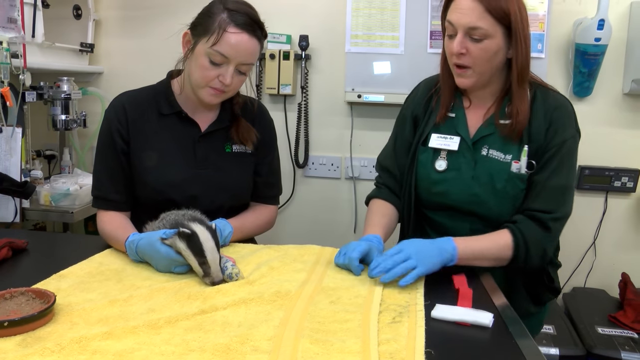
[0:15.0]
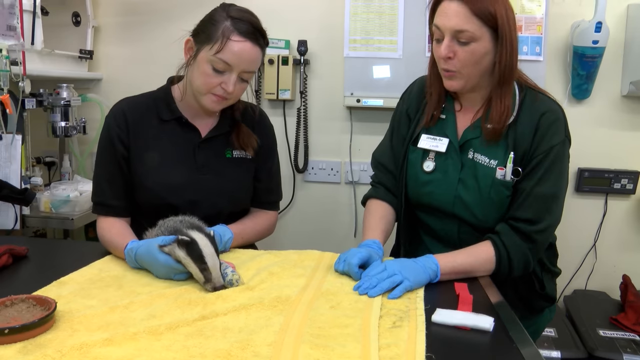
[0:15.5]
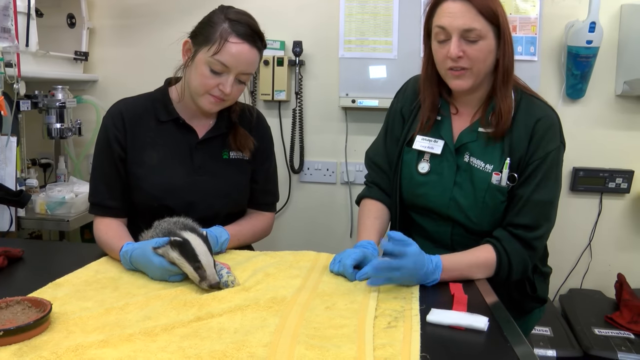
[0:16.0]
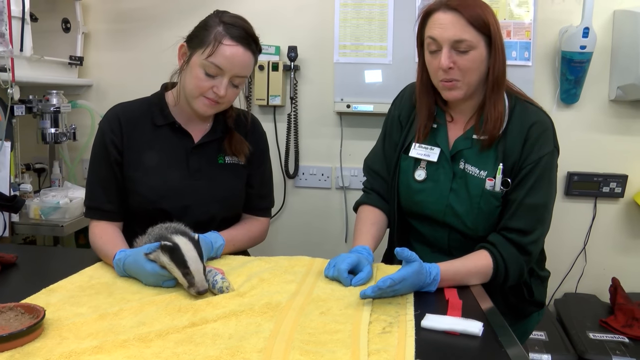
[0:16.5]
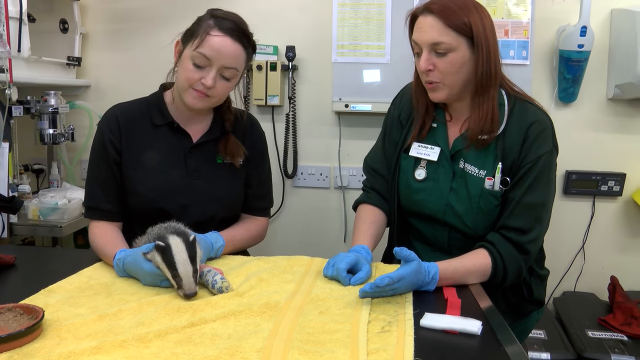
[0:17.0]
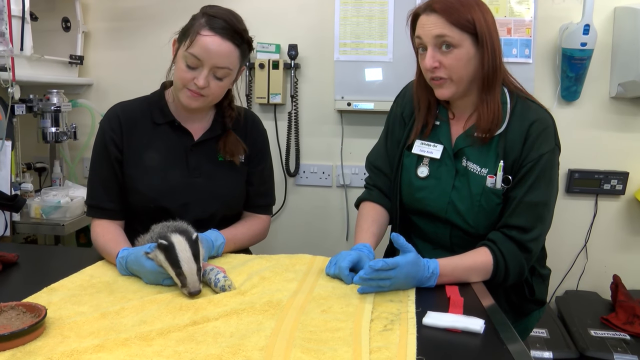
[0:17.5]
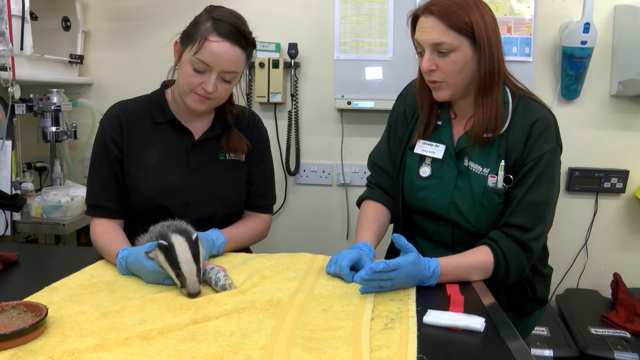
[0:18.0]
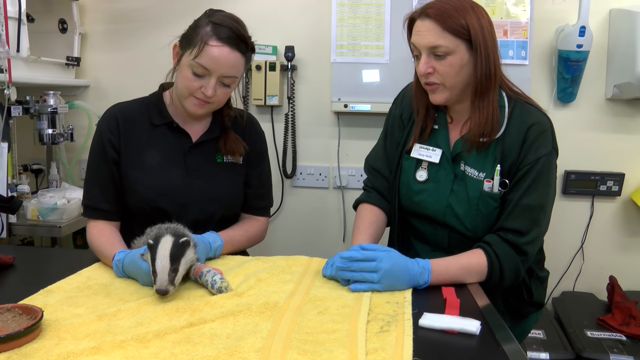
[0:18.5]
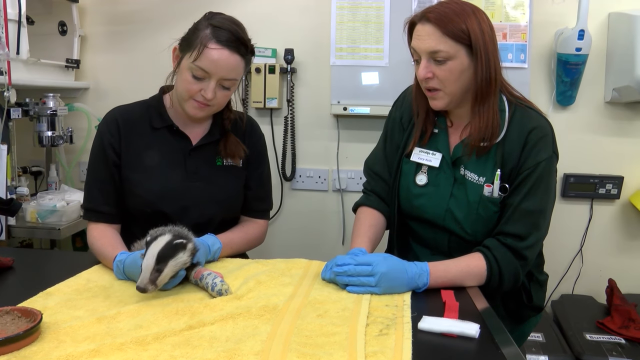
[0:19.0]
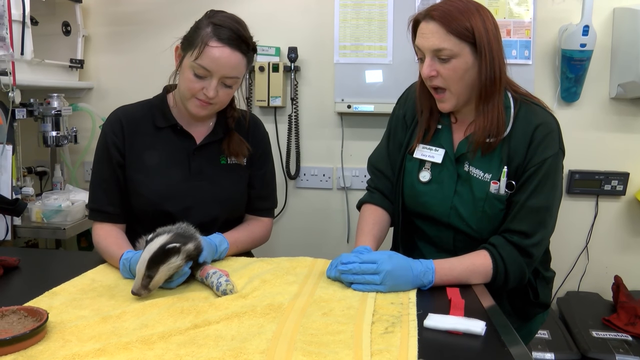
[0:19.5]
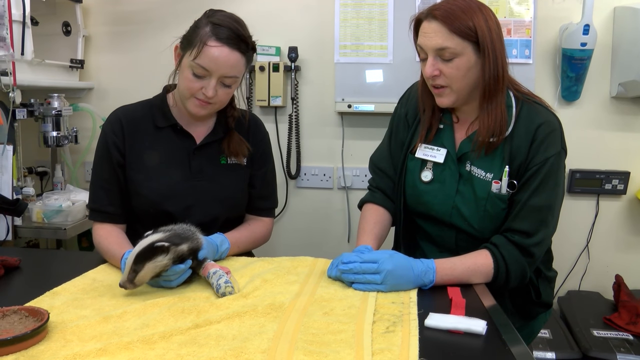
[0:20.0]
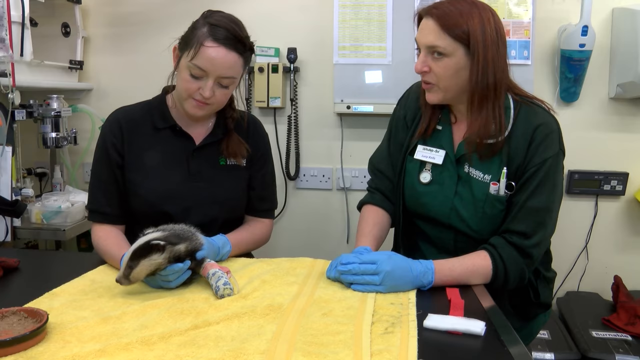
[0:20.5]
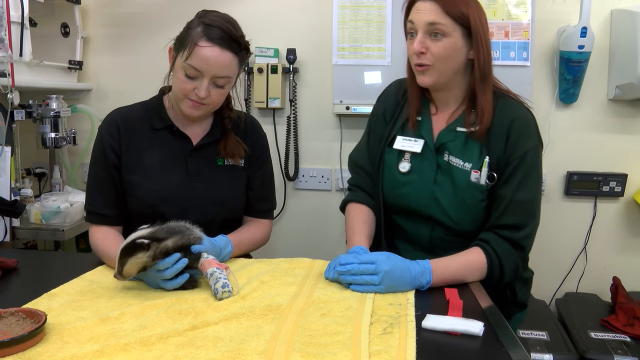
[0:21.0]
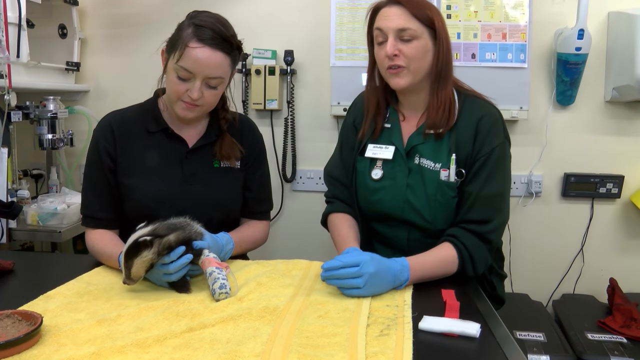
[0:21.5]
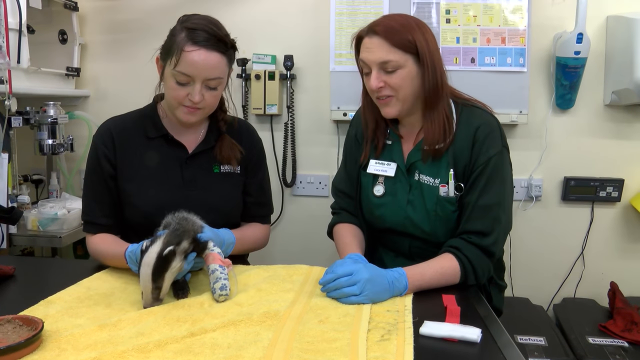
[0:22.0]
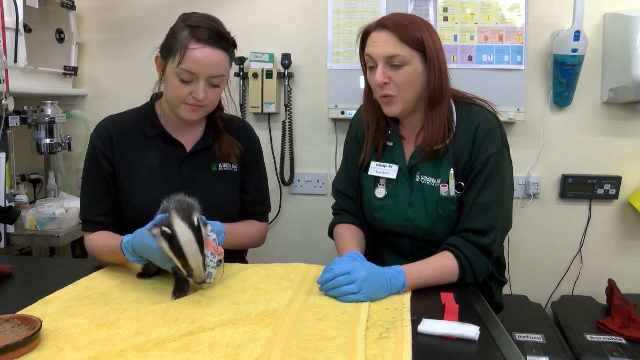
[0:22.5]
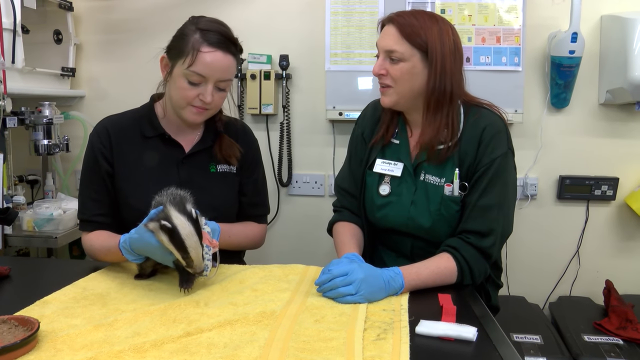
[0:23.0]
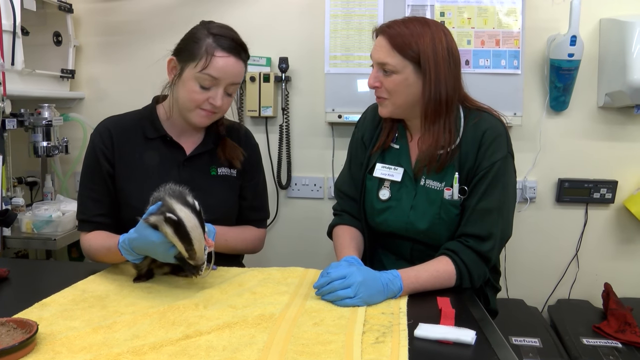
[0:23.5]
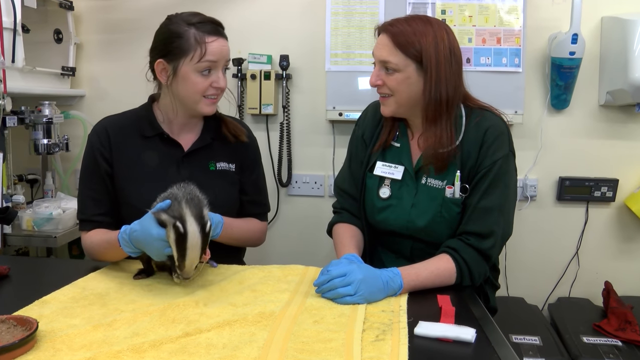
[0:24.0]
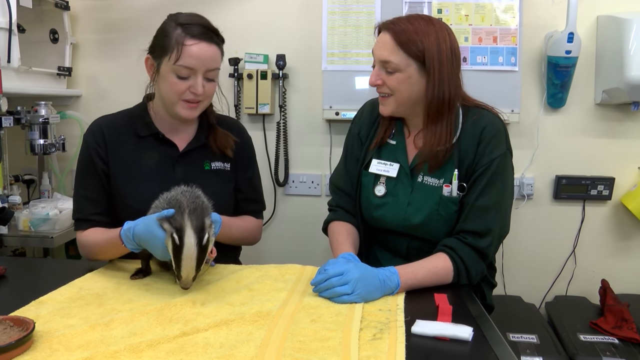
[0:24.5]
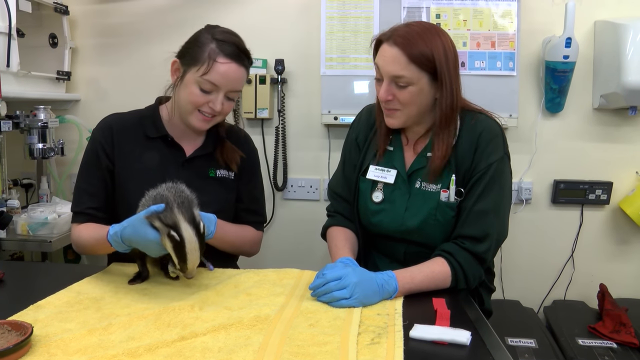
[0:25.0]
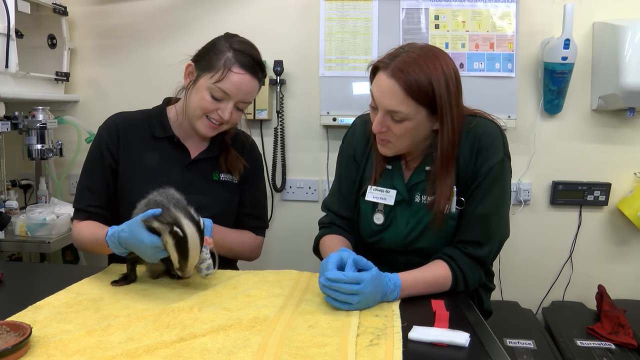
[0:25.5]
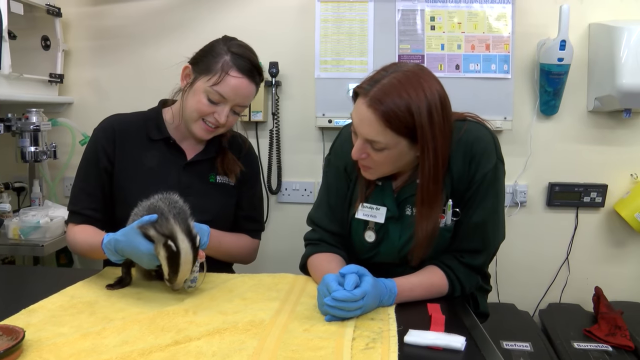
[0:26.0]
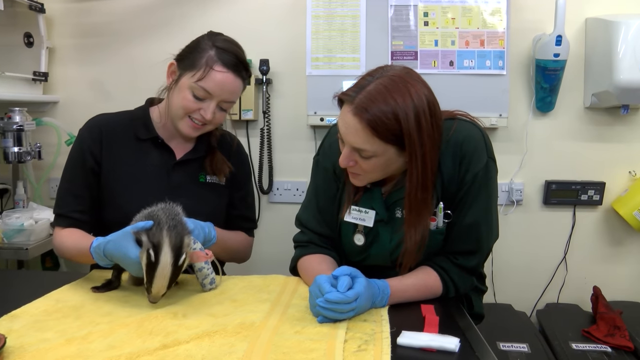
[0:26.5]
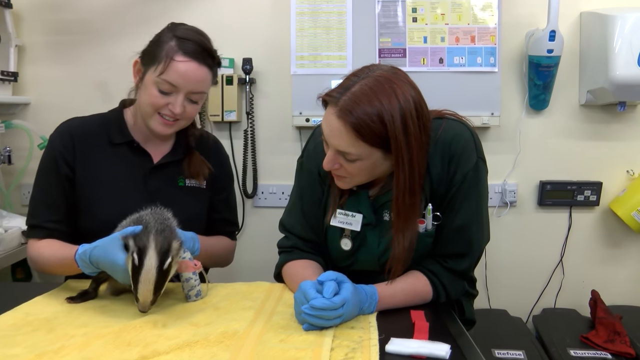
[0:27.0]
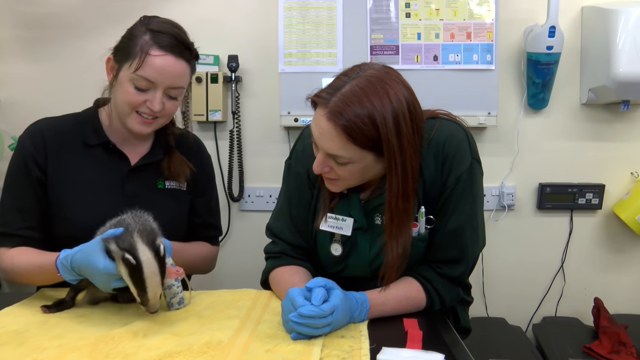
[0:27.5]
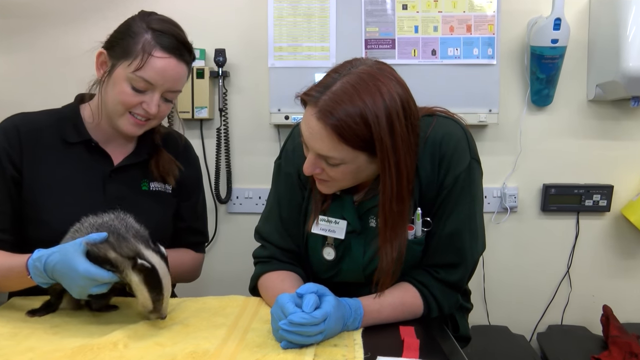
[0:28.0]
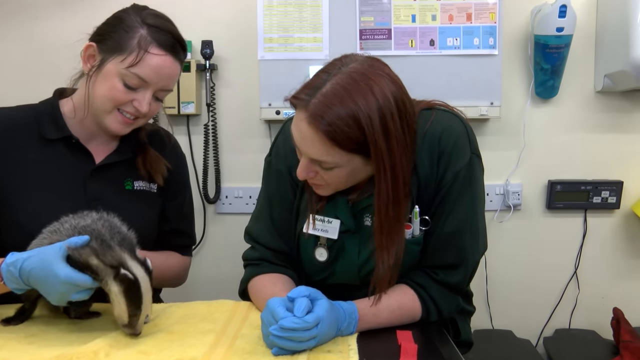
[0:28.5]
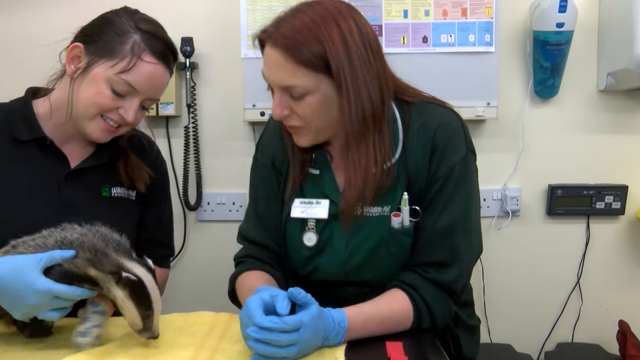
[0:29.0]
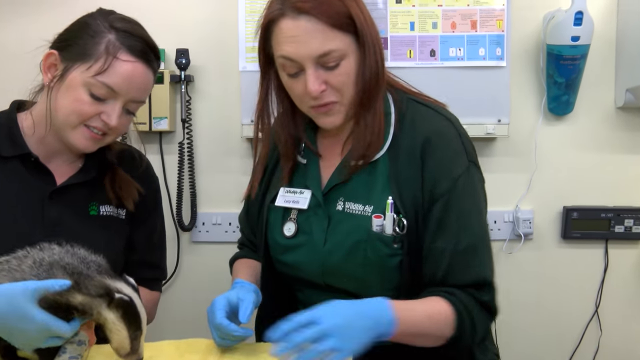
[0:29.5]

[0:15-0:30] The badger is on the yellow towel while the woman in the green shirt talks to the camera person. The badger looks around at its surroundings, and both women look at it. The badger looks like a small cub; it is black with a white stripe on its face, white with a black stripe going over each eye to the back. The woman's shirt reads "Wildlife Aid Foundation" with a green paw print.